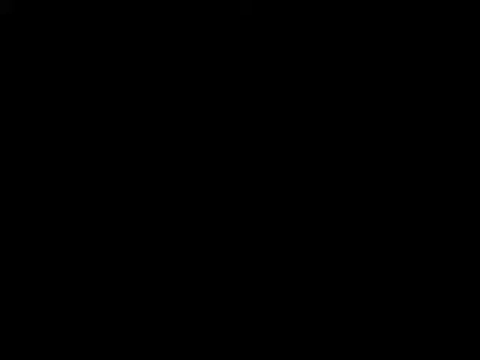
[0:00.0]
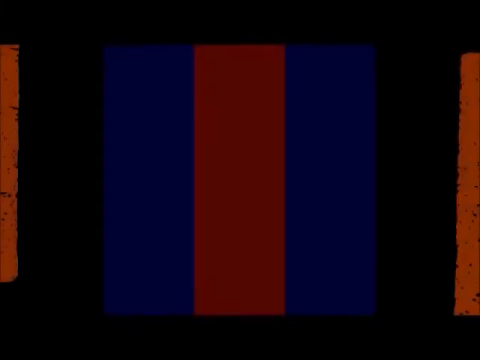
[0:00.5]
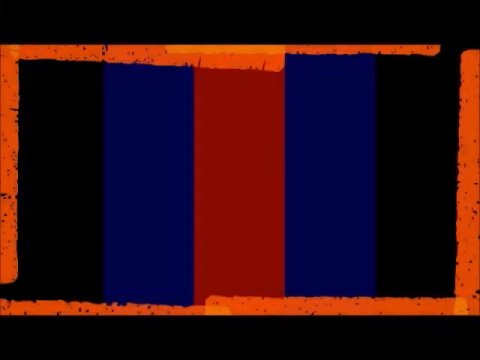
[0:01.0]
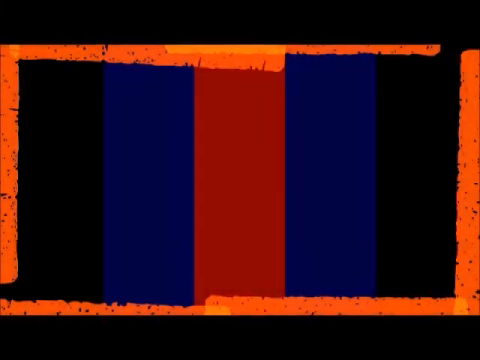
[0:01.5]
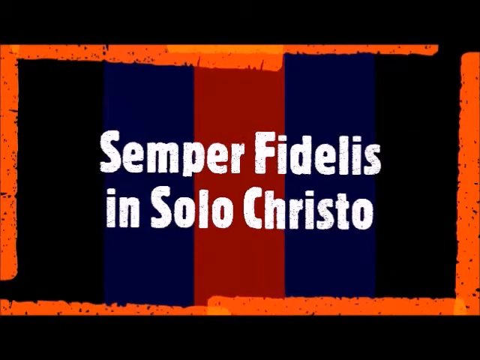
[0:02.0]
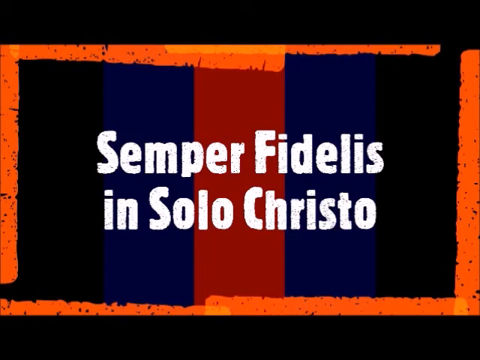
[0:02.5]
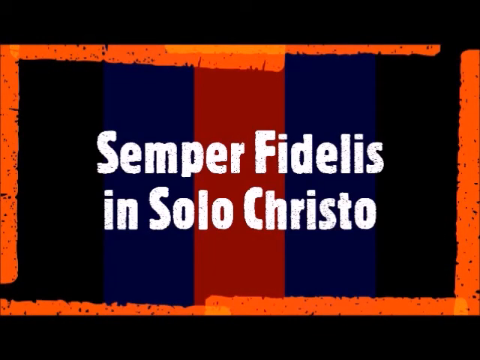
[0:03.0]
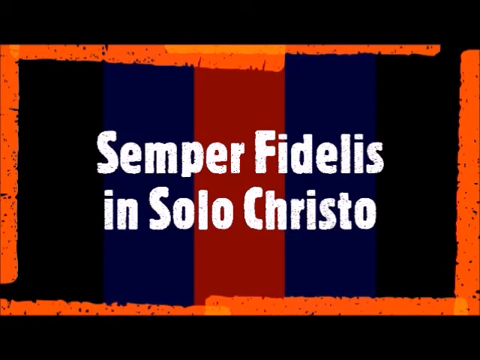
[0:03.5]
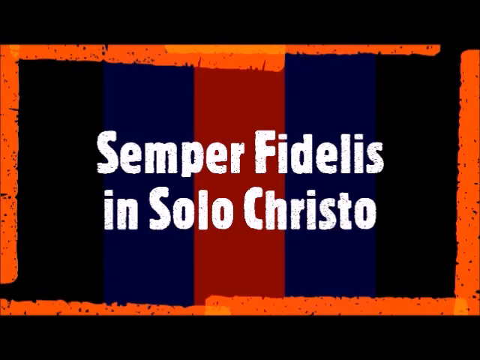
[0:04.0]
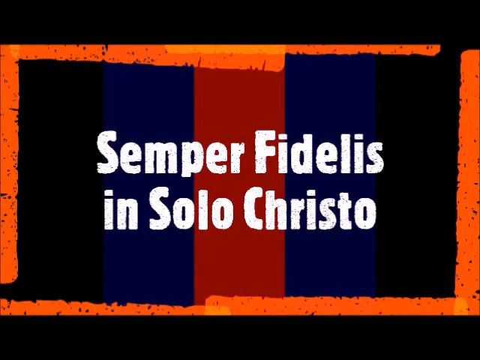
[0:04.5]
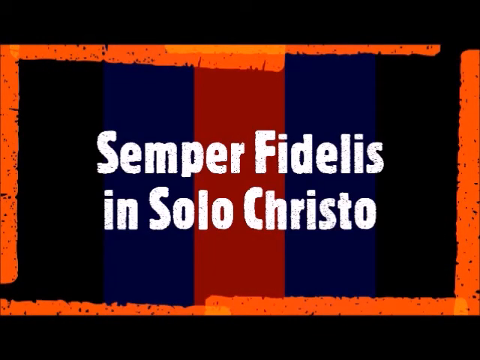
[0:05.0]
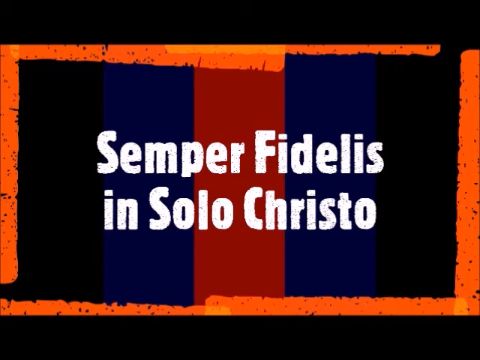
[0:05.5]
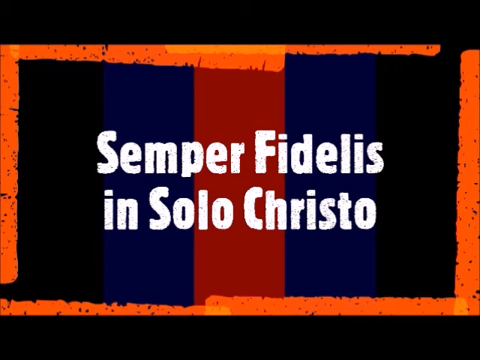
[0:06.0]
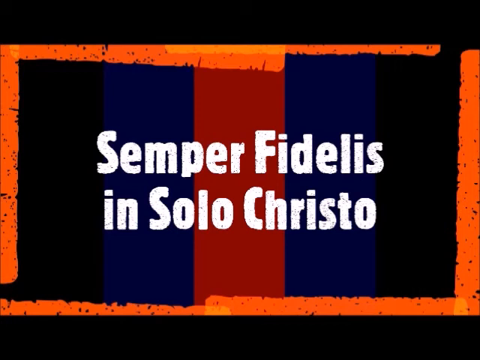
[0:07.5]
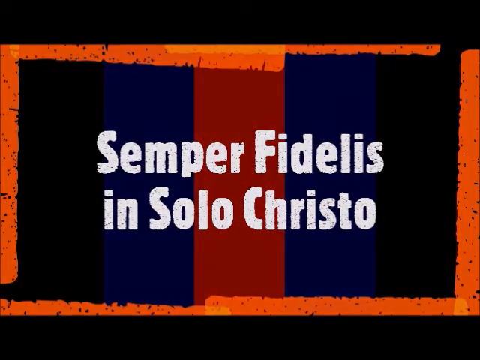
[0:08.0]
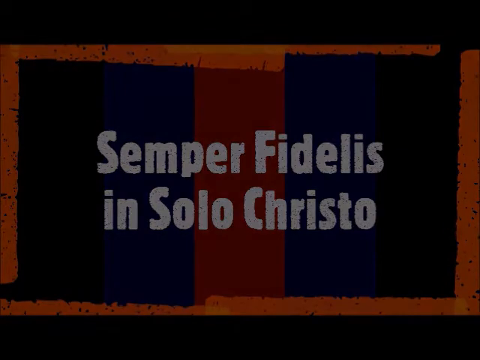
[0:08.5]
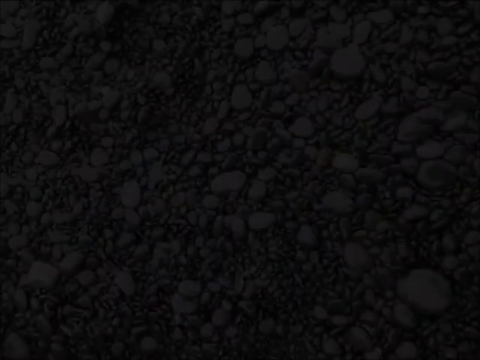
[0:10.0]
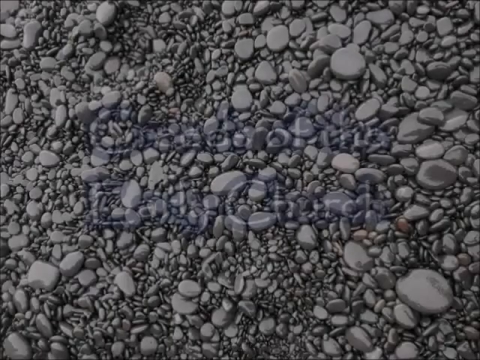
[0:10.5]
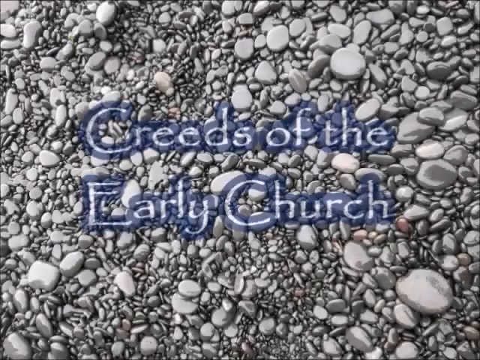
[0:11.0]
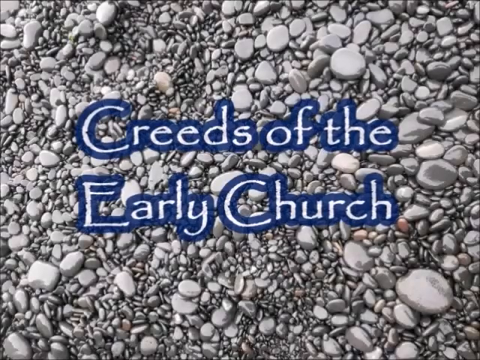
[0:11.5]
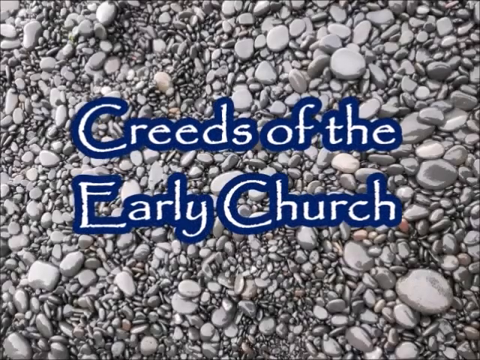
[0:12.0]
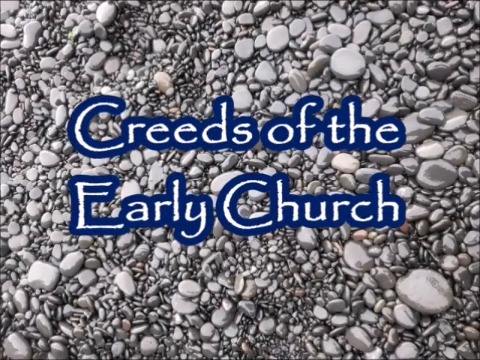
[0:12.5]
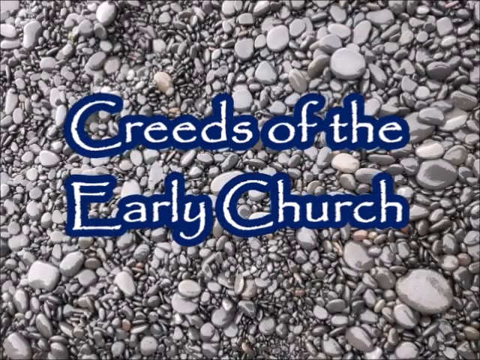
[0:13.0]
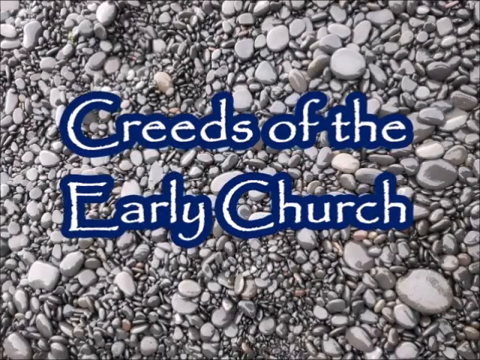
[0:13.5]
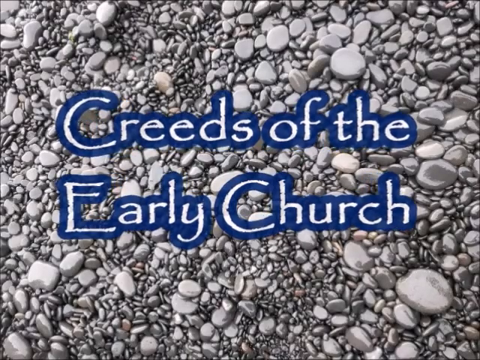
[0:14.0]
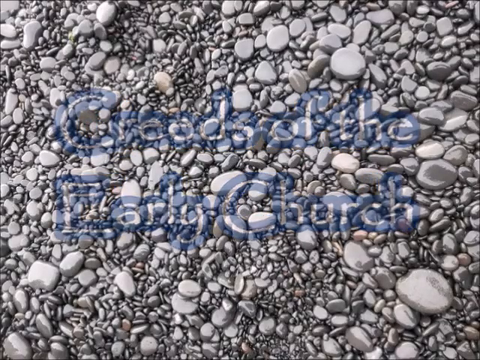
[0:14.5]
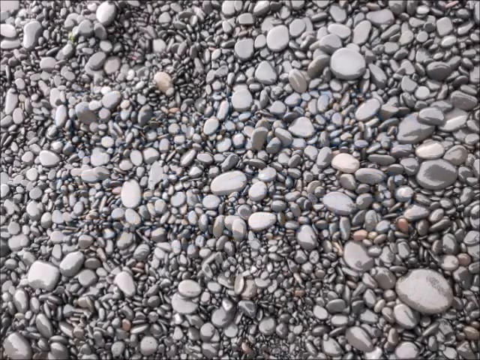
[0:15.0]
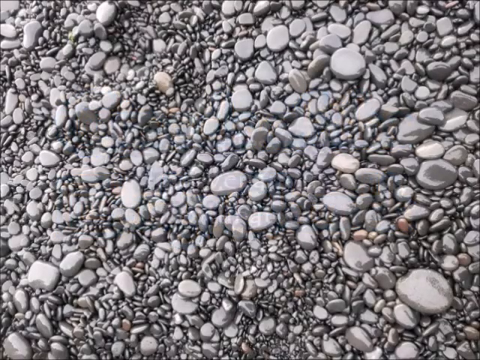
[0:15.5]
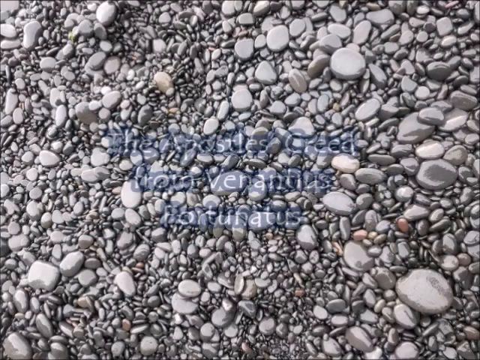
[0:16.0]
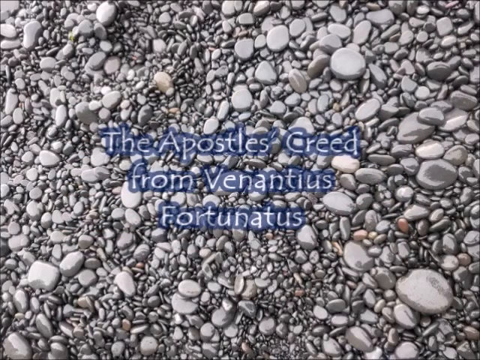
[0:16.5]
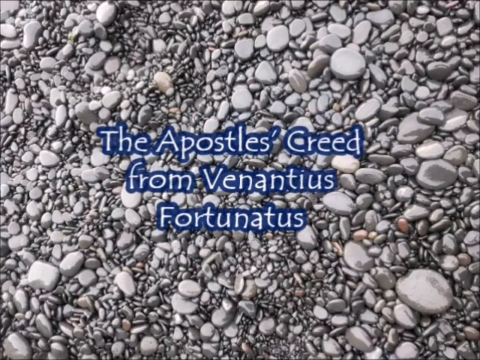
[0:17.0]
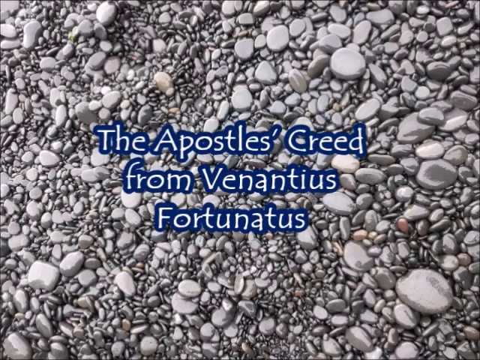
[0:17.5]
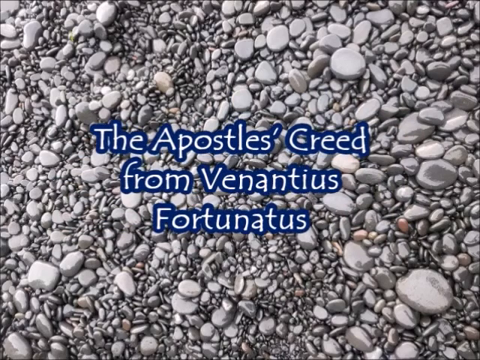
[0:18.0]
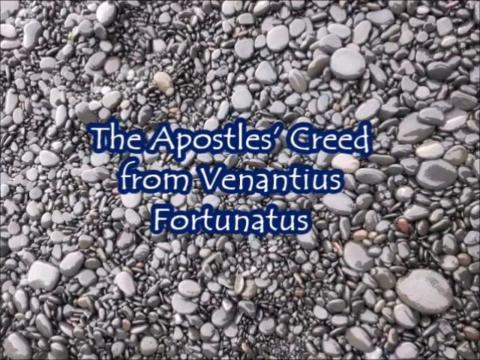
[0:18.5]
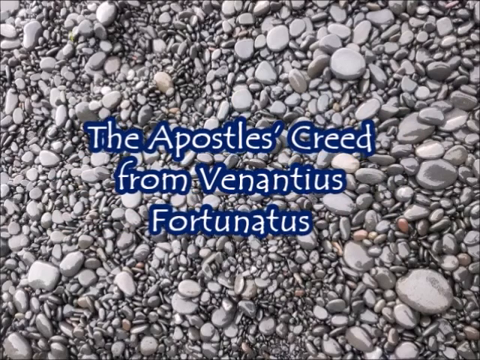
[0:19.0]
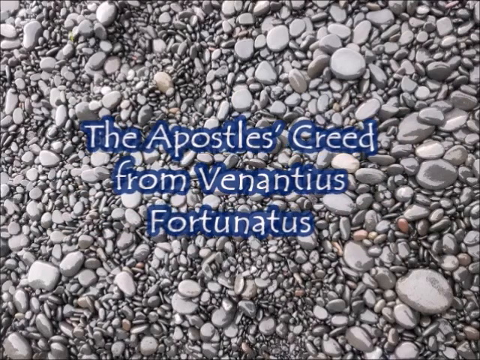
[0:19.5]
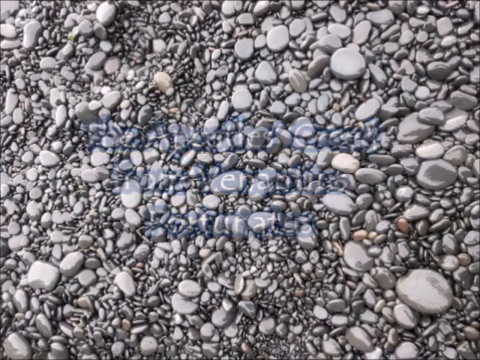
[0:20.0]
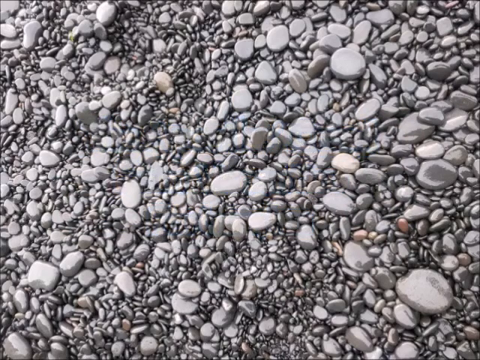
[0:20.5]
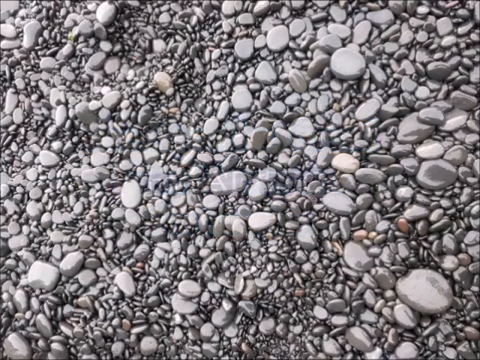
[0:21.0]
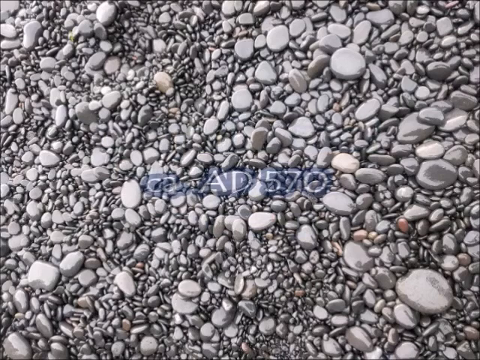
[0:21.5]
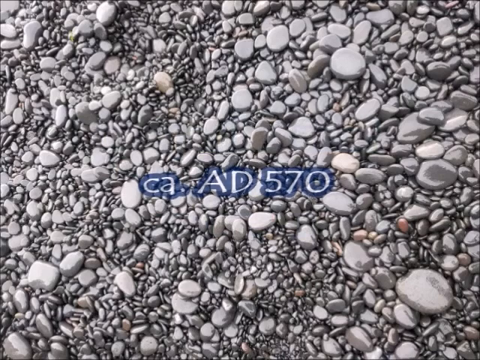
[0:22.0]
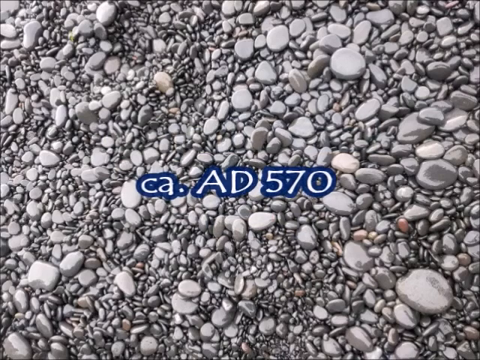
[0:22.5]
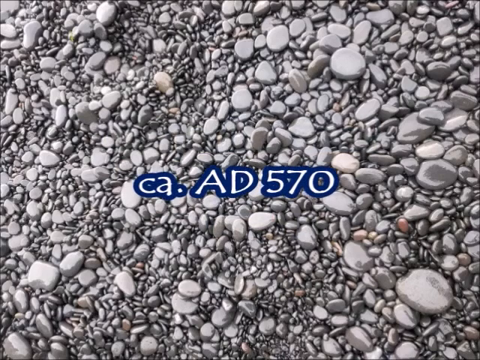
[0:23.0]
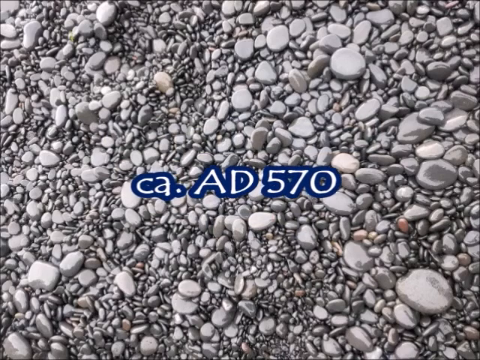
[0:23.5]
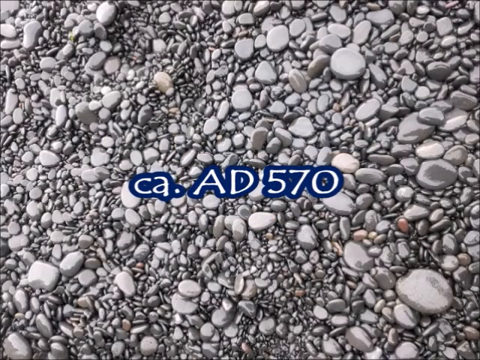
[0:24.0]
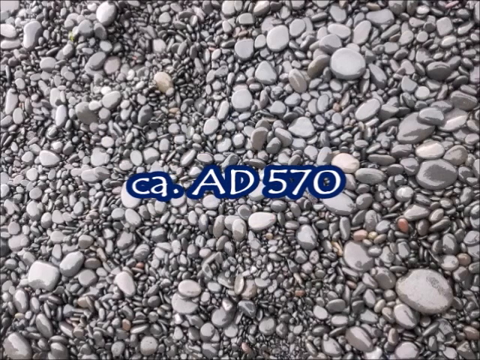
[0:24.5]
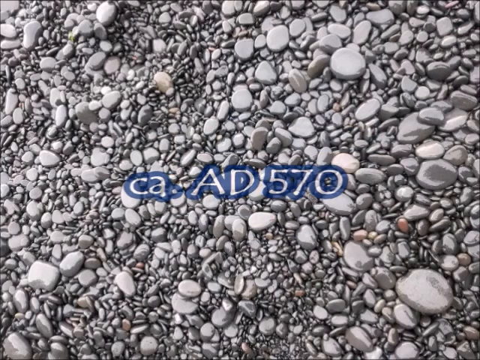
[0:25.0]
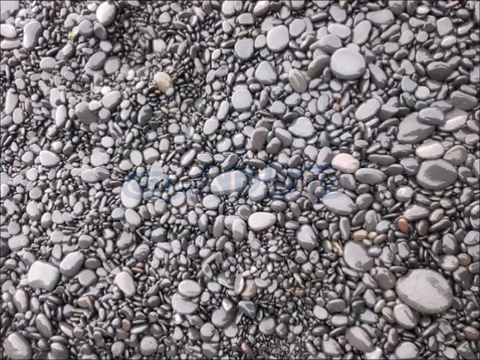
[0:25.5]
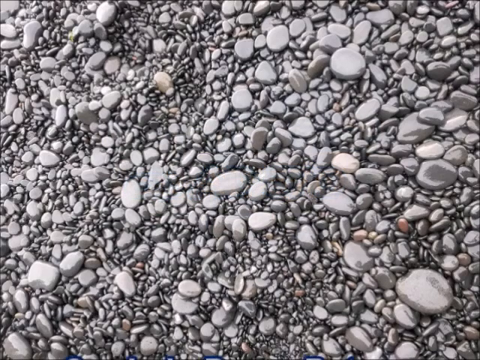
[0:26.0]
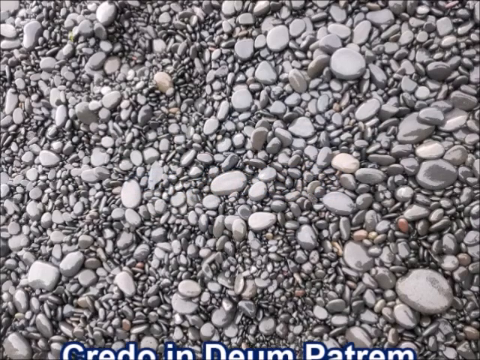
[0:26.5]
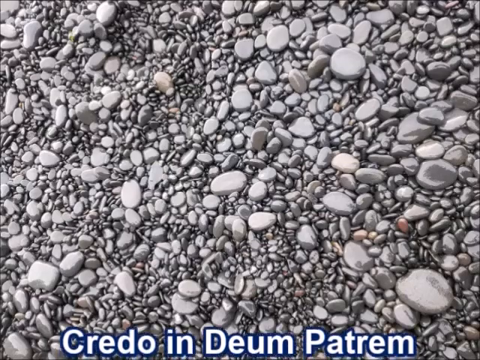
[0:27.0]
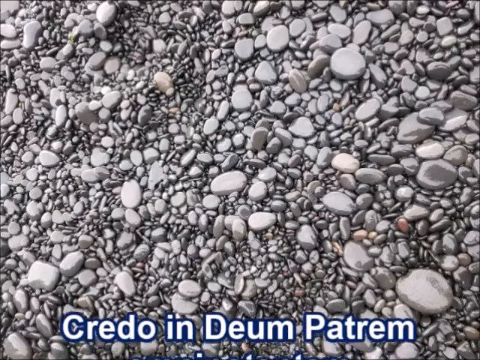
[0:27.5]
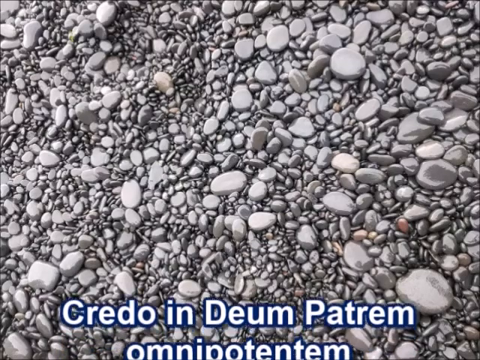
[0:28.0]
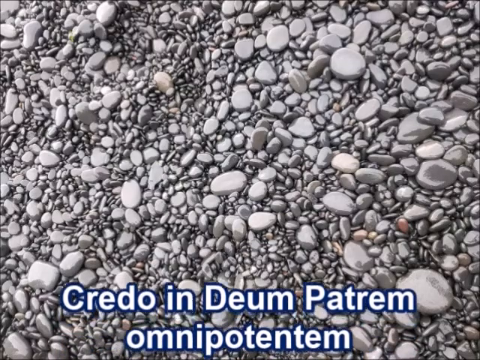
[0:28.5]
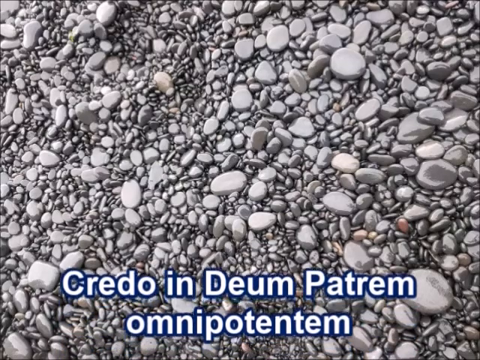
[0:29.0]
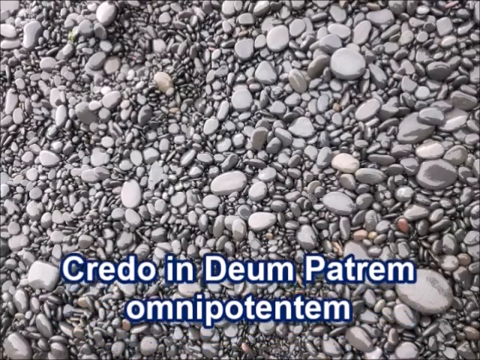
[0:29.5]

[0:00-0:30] The video opens with an animated title that reads "Semper Fides in Solo Cristo." Its background apparently uses paintbrush strokes. A transition follows to text about an early church. Pebbled rocks appear, all a solid gray and shiny. The text mentions a creed from a certain fortress and gives the year "AD 570." The text seems to move slowly upward; the letters are white and outlined in dark navy.